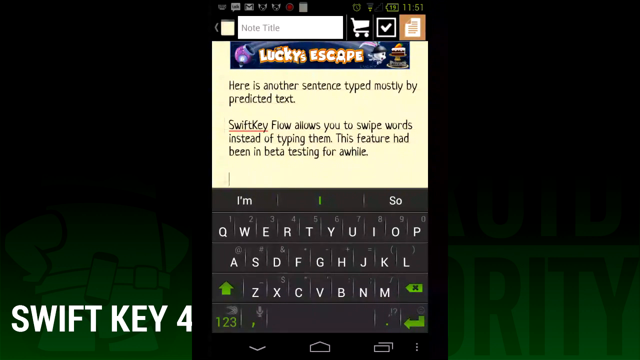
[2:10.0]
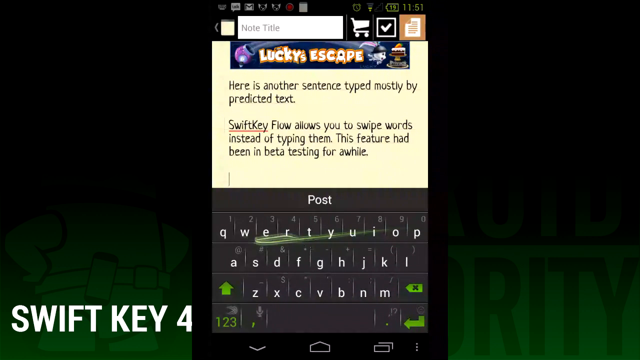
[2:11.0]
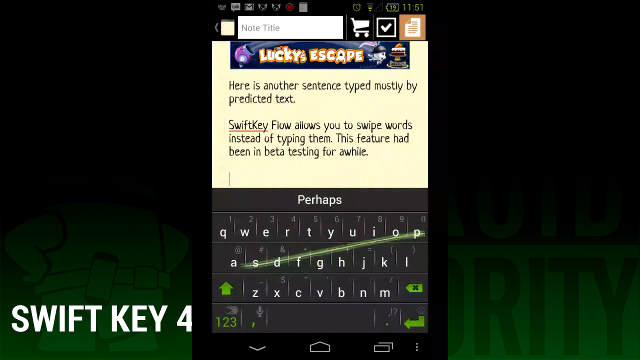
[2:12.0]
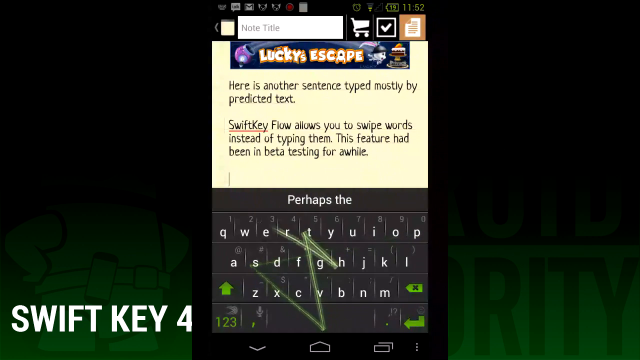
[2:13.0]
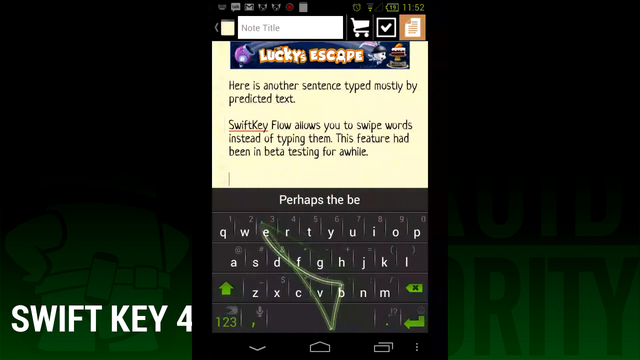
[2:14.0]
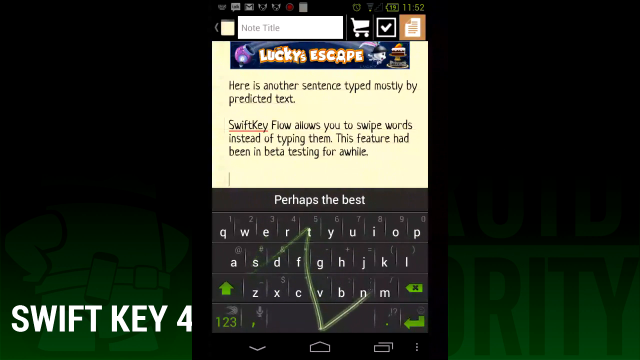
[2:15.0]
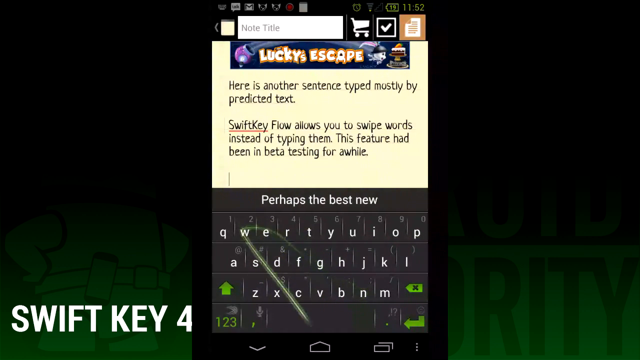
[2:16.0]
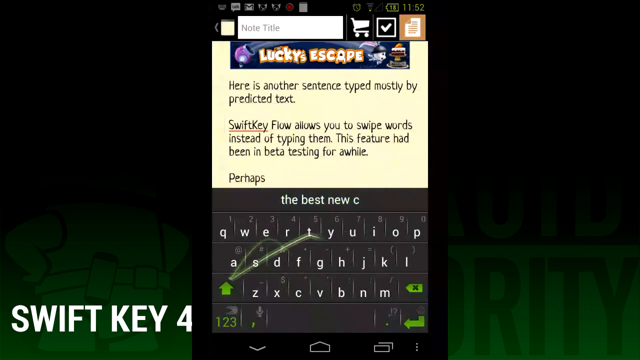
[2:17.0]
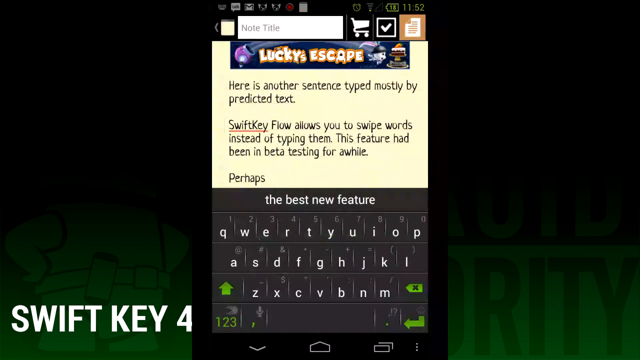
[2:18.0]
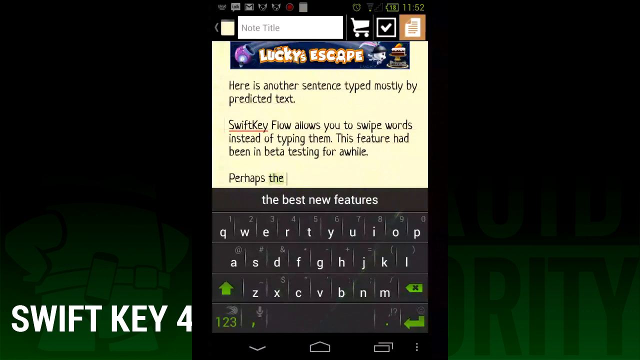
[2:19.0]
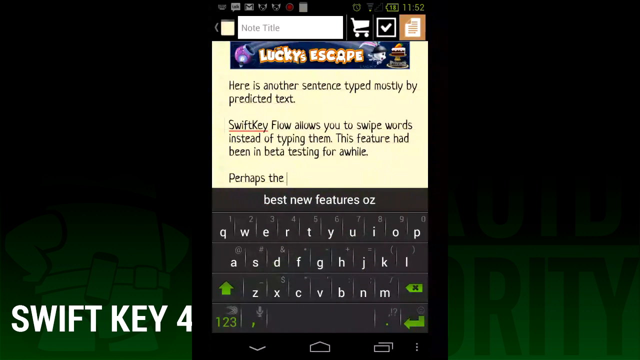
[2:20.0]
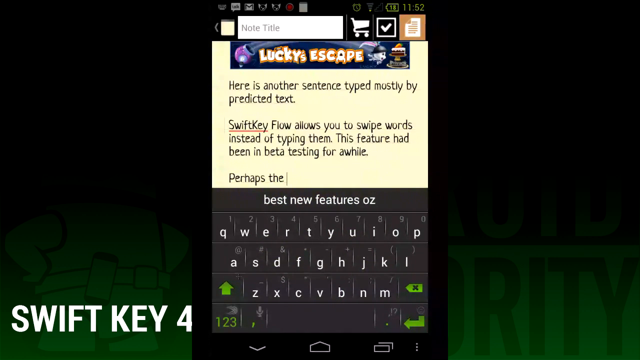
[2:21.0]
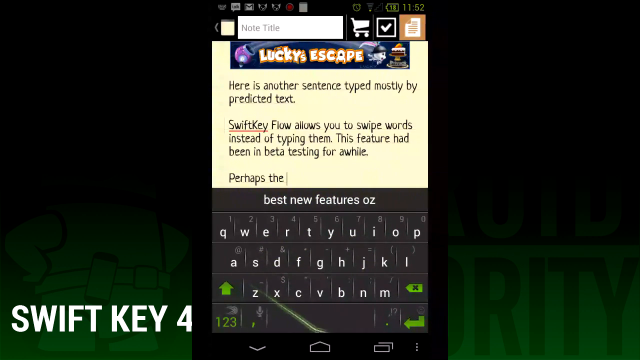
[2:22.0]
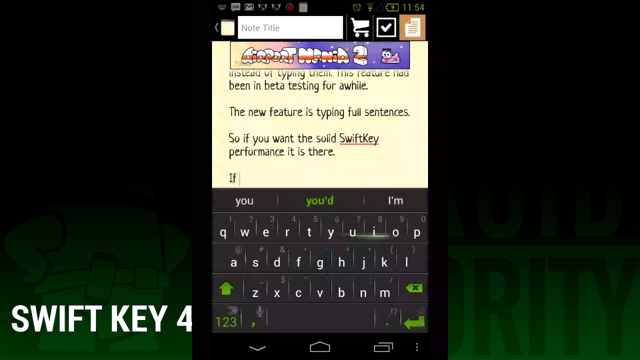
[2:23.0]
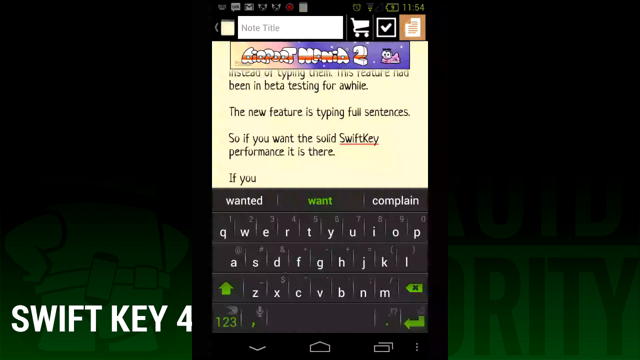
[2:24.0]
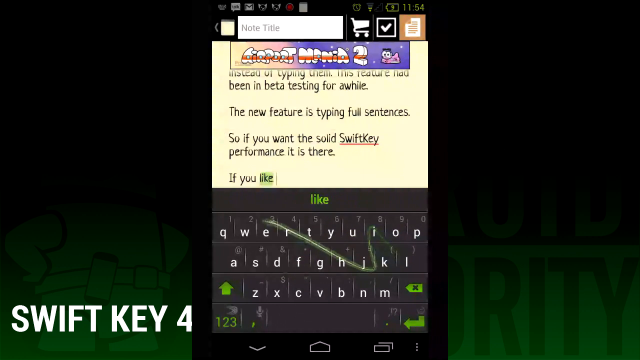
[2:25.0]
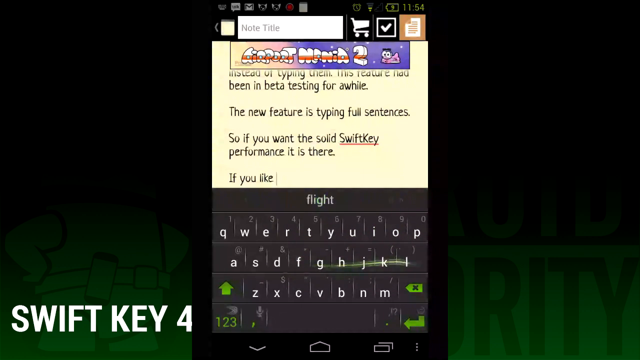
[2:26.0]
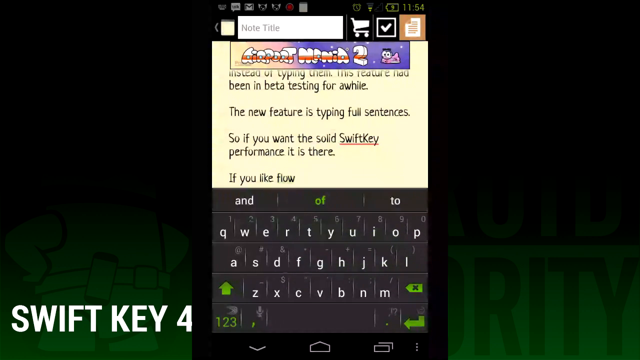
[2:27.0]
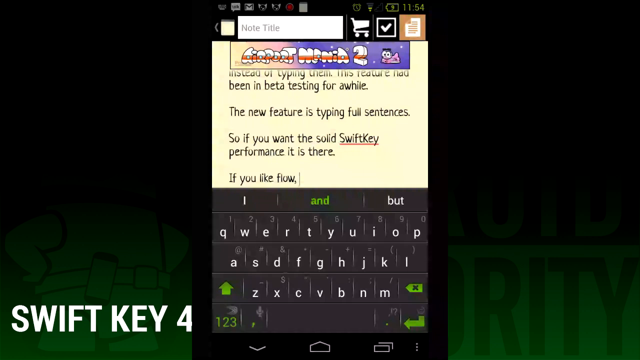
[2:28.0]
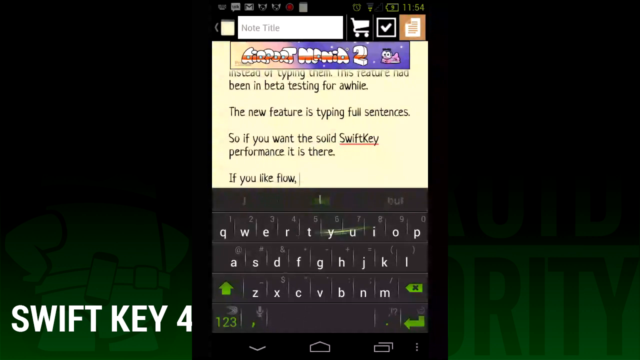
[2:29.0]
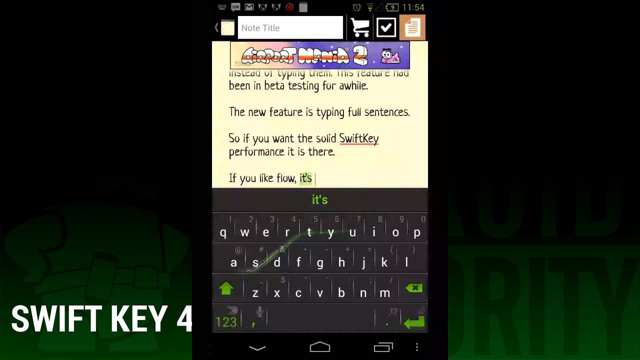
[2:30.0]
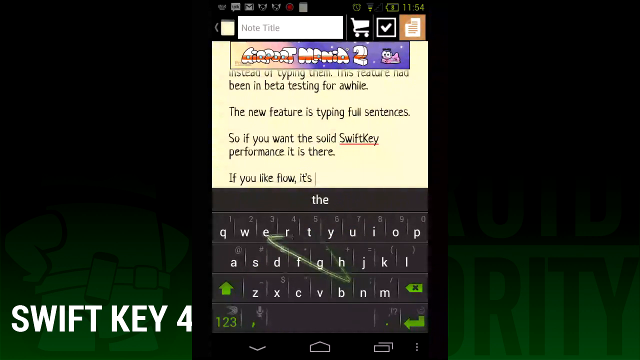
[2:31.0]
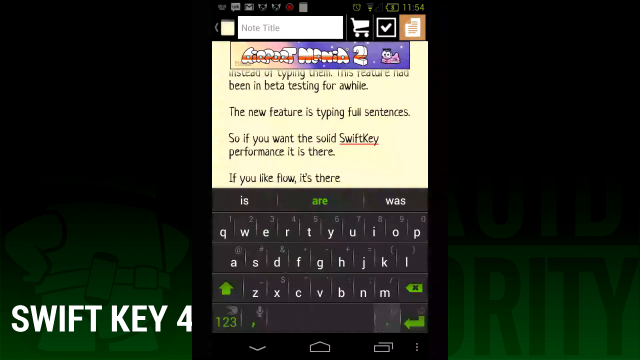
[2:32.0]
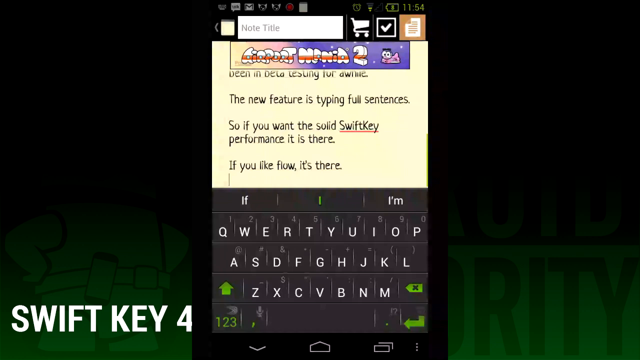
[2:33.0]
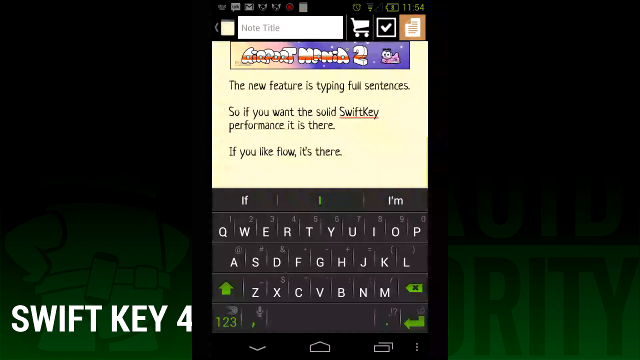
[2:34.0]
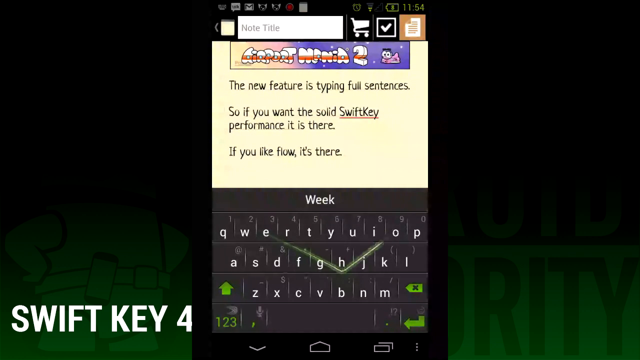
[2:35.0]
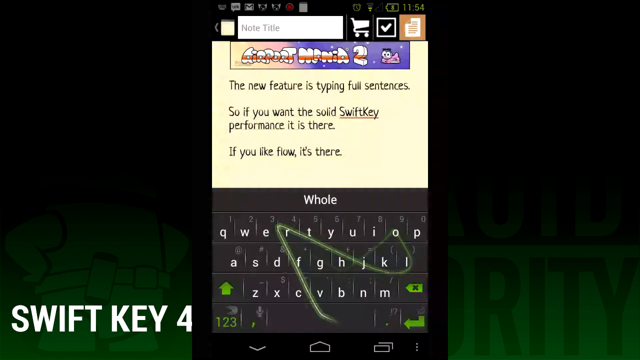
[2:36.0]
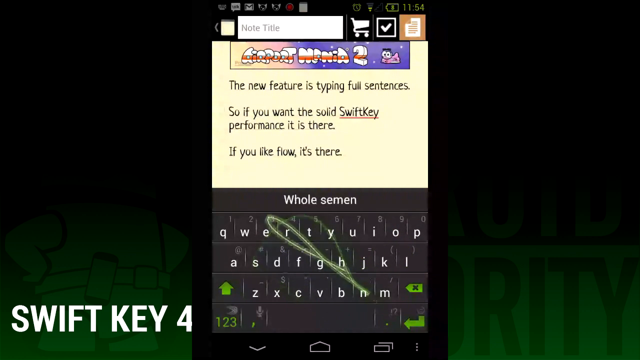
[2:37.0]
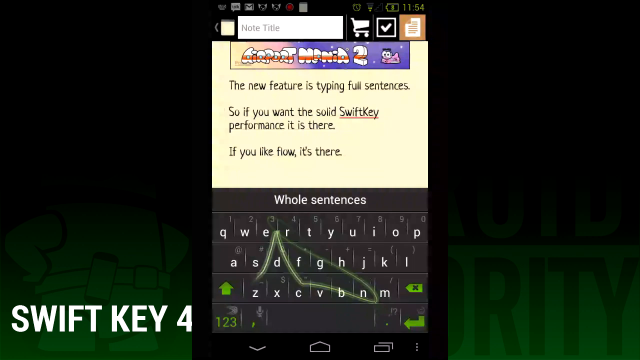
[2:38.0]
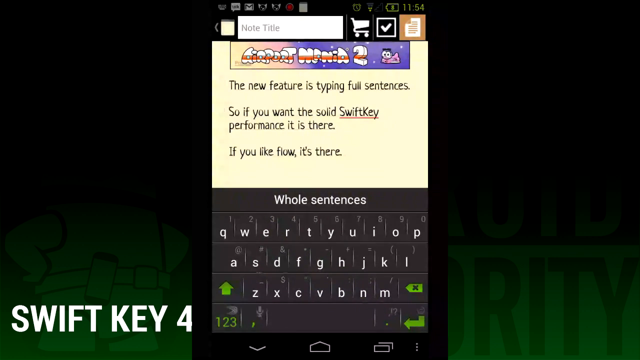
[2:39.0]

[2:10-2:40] In the lower left-hand corner, "Swift Key 4" appears in white. The image is of a phone with a yellow background, and the typed font is black. It reads "here's another sentence type mostly by predicted text", and after some space "Swift key" is underlined in red, while the lower left-hand corner shows a space between the words. The text continues: "Swift key flow allows you to swipe words instead of typing them. This feature had been in beta testing for a while." The person types what looks like it will be "perhaps the best new feature", but at first it only says "perhaps the", moving slowly. Then the text says "new feature is type of full sentences. So if you want the solid swift key performance, it is here. If you like flow it's there". Green lines move all over the keyboard, and the typing moves really slowly.